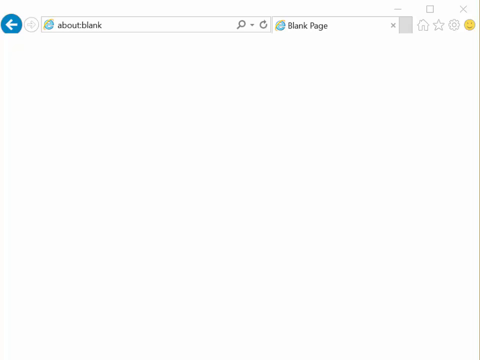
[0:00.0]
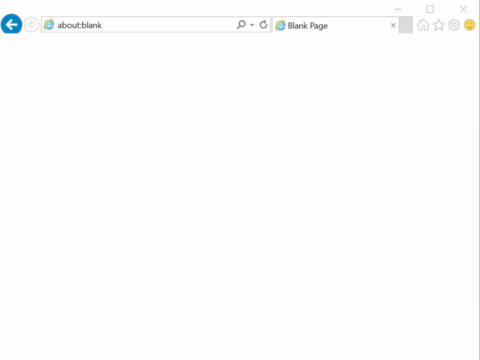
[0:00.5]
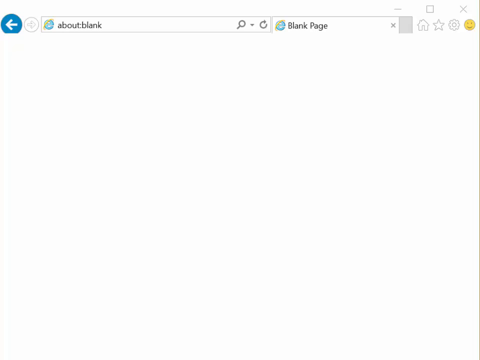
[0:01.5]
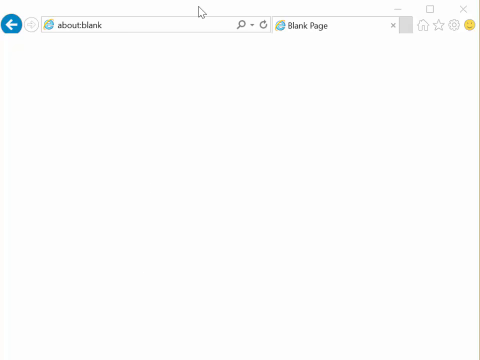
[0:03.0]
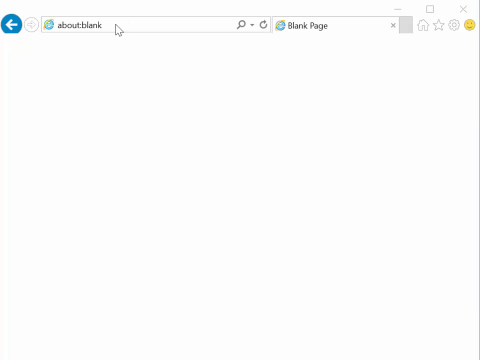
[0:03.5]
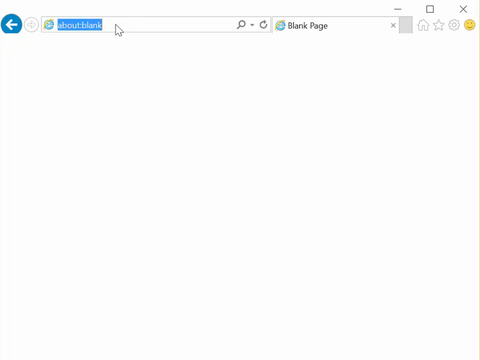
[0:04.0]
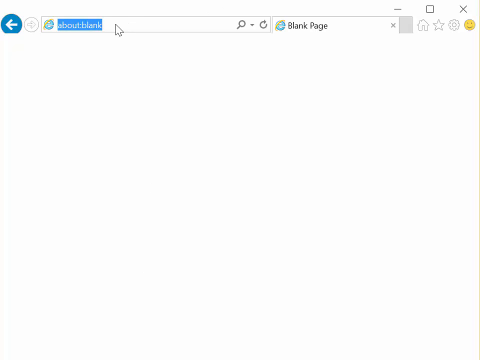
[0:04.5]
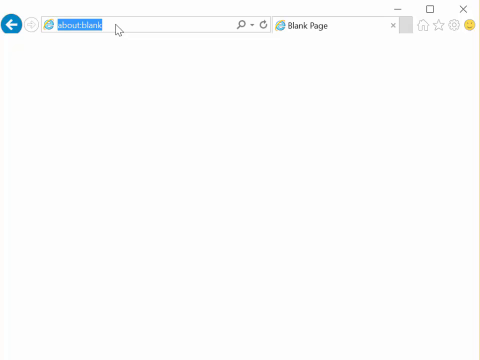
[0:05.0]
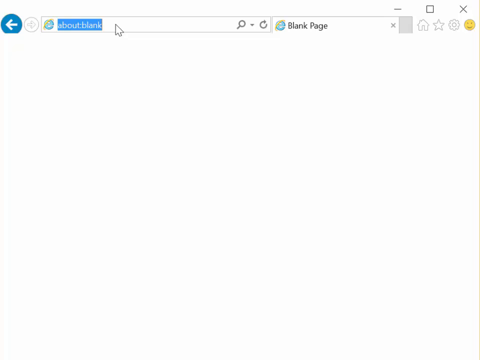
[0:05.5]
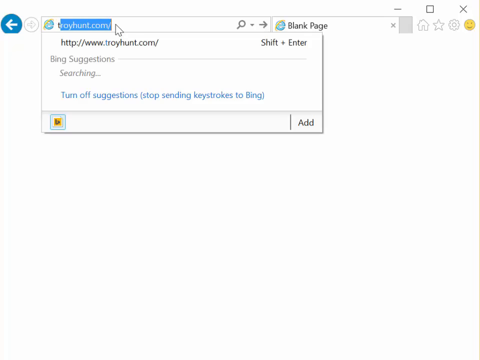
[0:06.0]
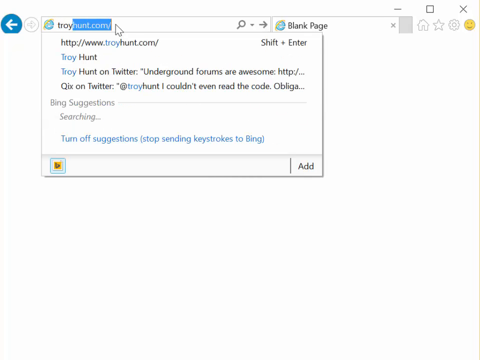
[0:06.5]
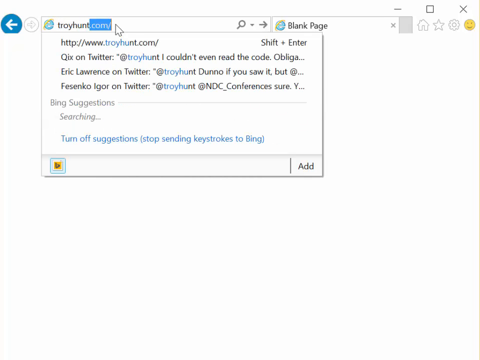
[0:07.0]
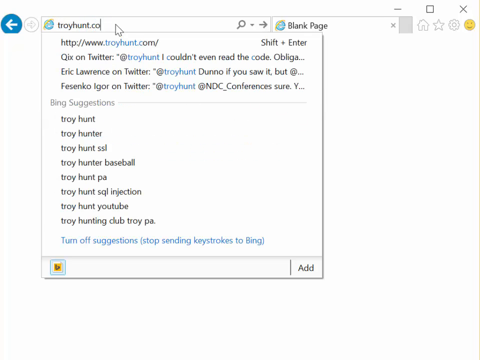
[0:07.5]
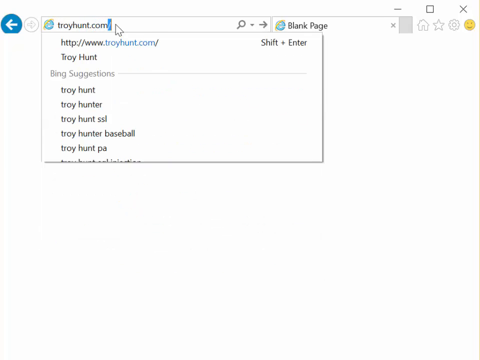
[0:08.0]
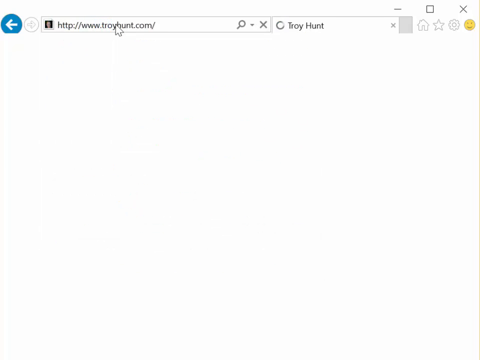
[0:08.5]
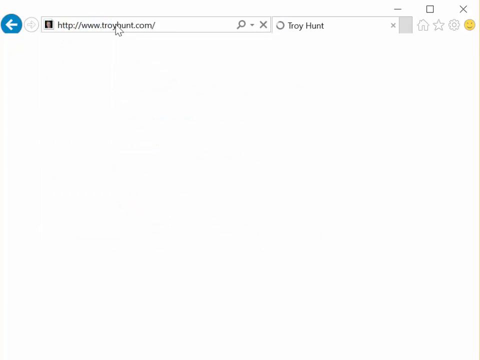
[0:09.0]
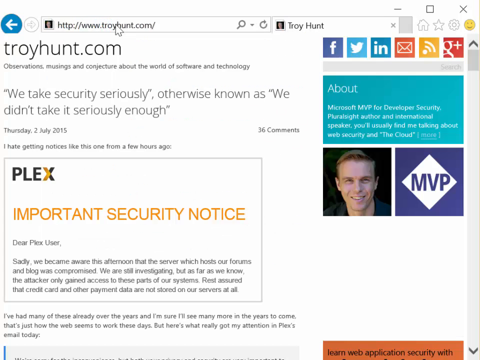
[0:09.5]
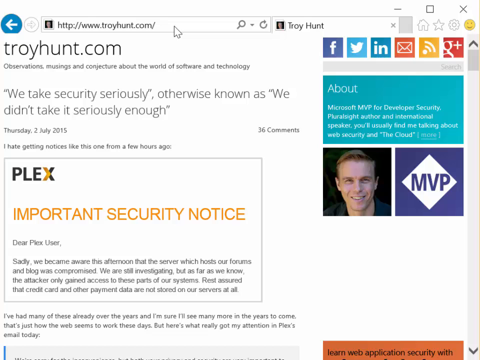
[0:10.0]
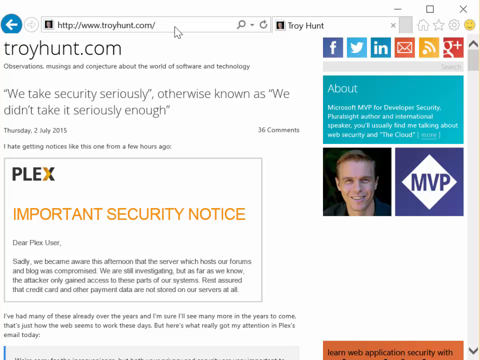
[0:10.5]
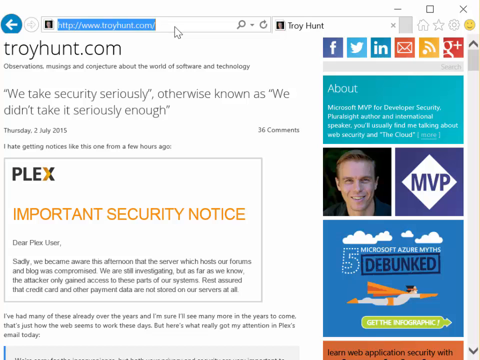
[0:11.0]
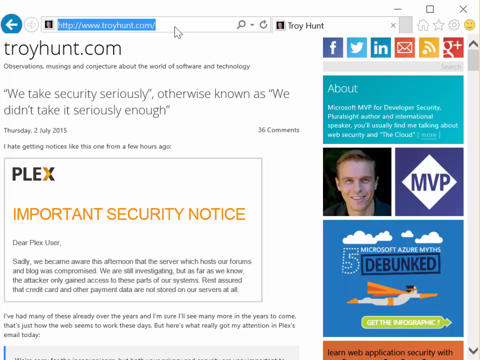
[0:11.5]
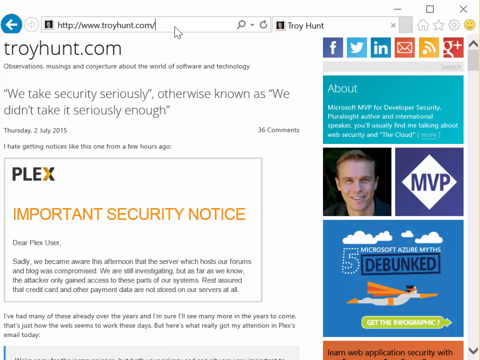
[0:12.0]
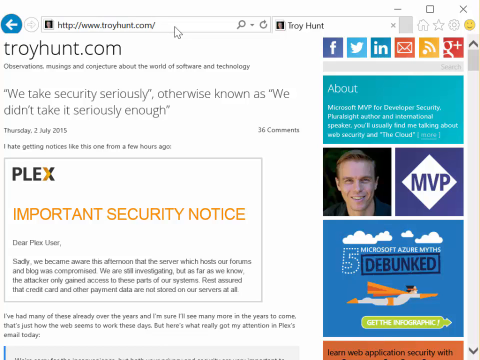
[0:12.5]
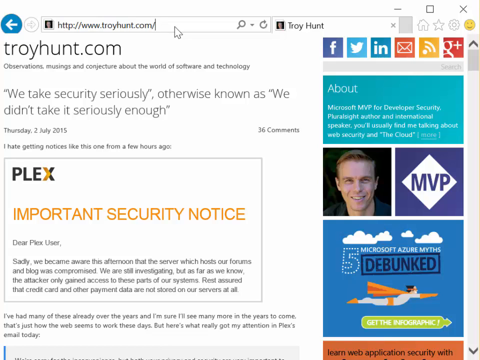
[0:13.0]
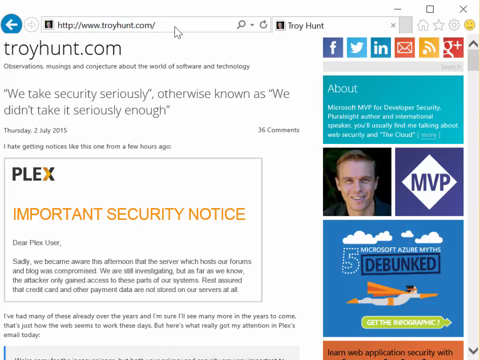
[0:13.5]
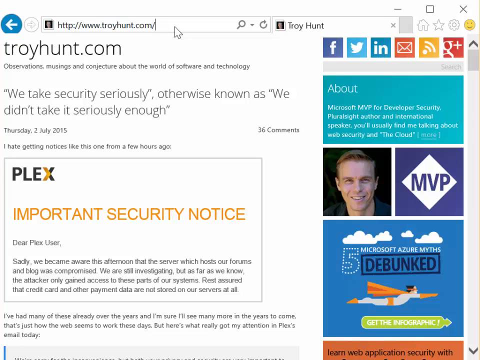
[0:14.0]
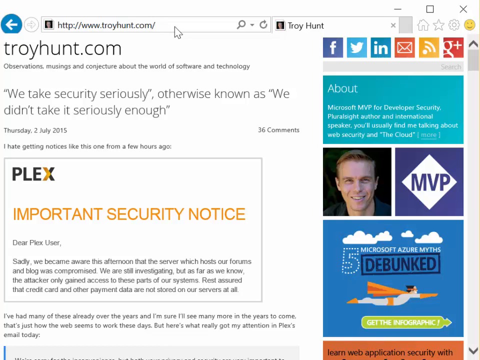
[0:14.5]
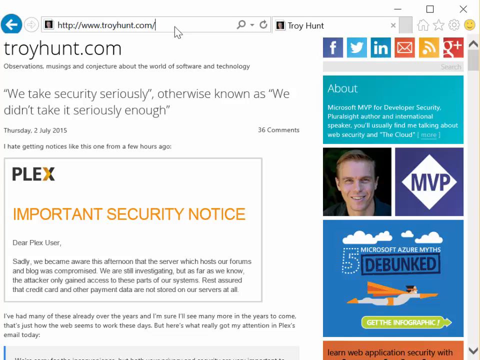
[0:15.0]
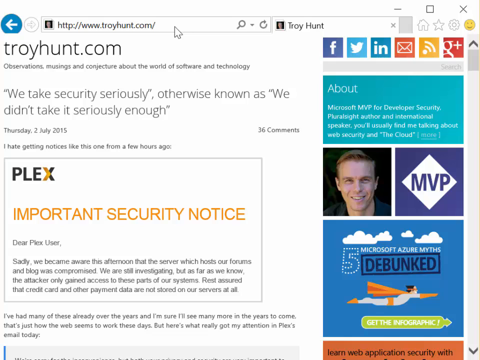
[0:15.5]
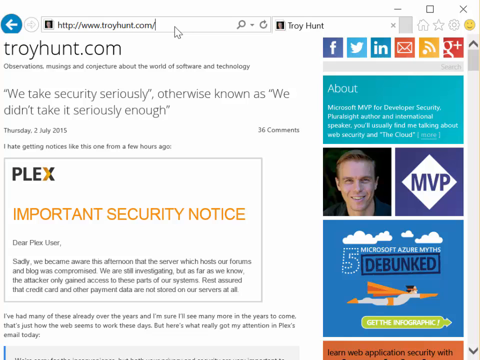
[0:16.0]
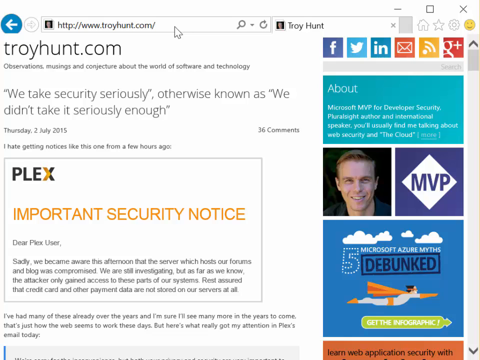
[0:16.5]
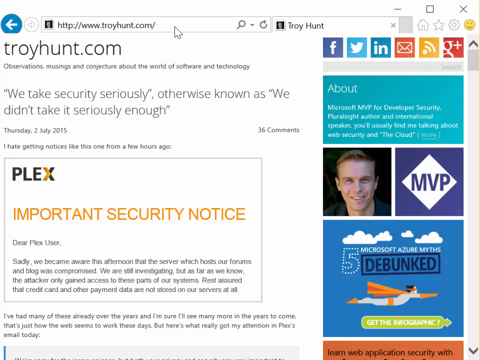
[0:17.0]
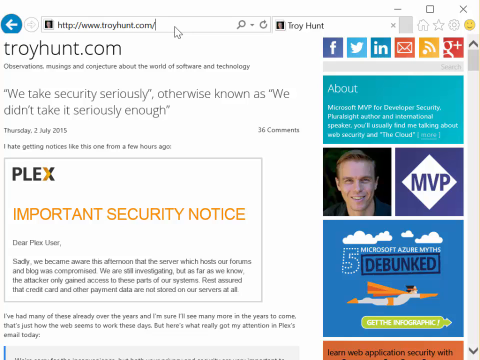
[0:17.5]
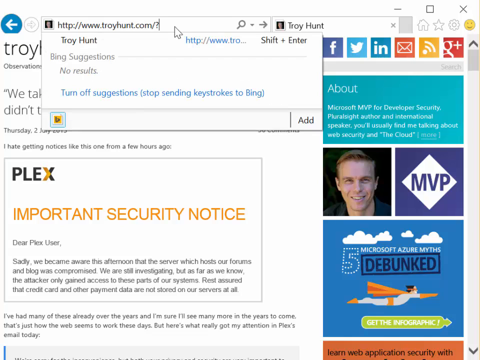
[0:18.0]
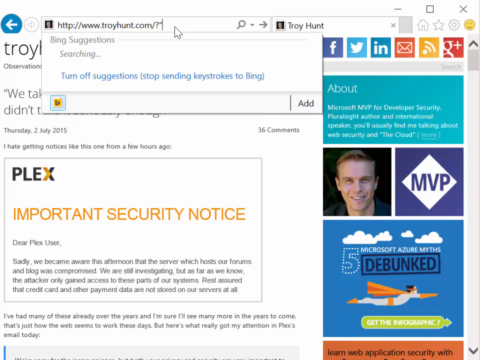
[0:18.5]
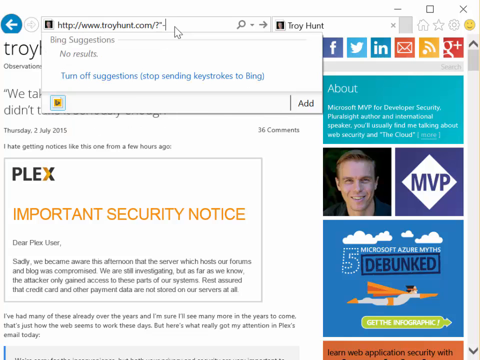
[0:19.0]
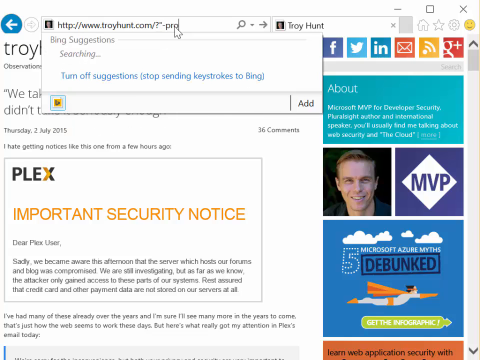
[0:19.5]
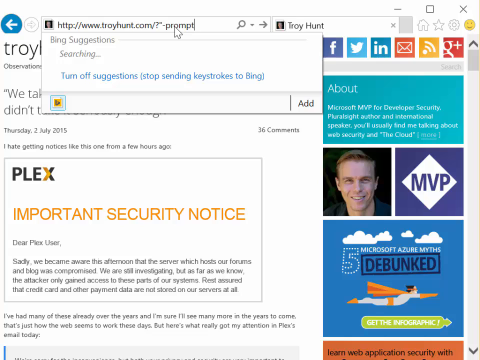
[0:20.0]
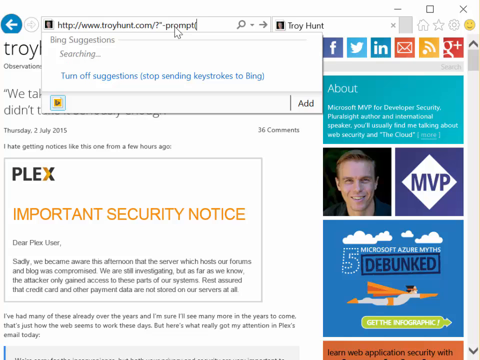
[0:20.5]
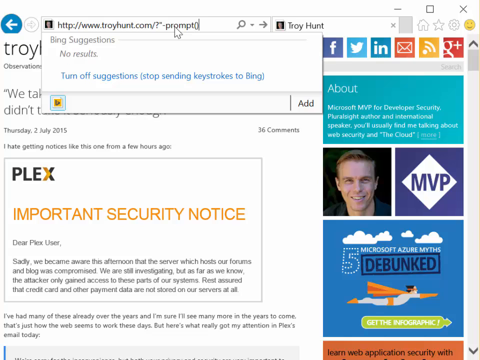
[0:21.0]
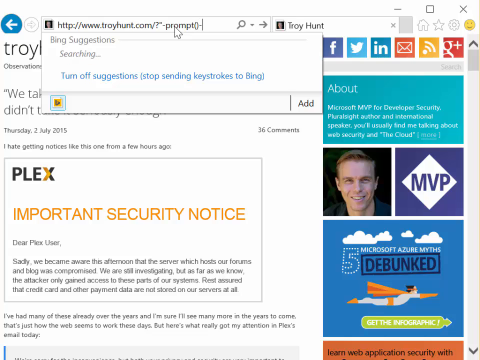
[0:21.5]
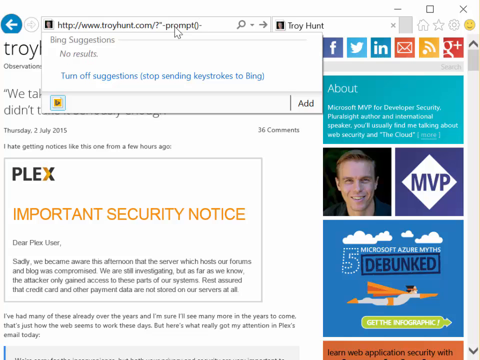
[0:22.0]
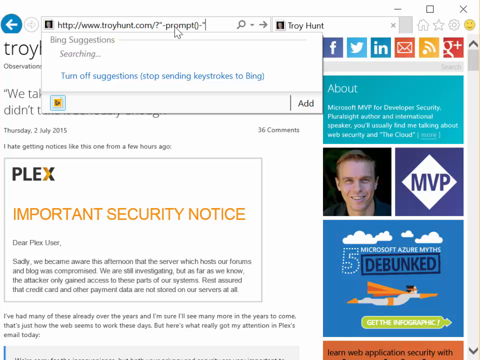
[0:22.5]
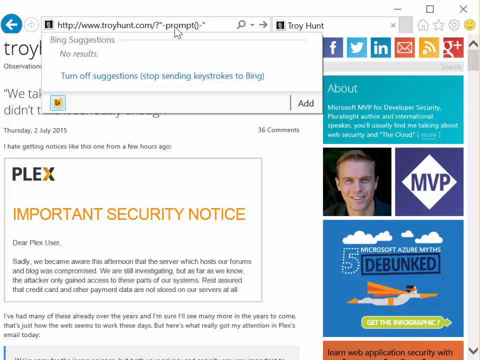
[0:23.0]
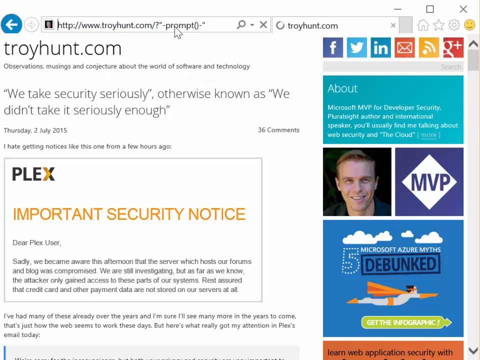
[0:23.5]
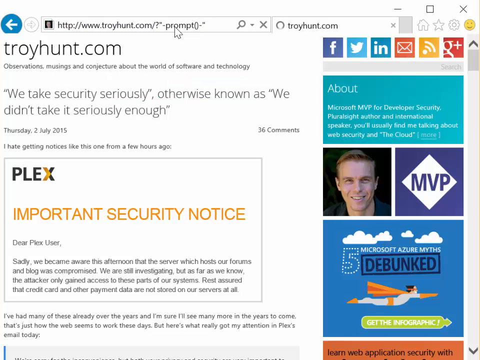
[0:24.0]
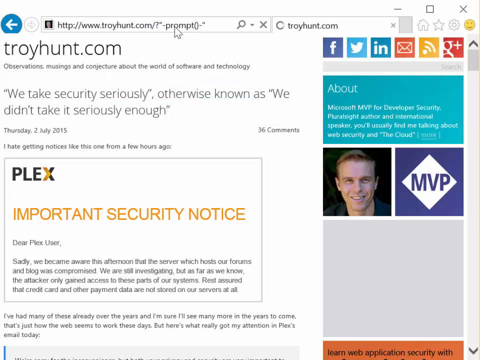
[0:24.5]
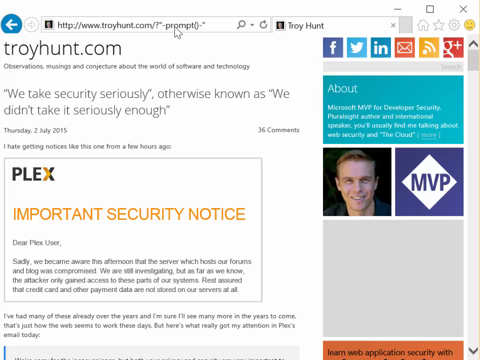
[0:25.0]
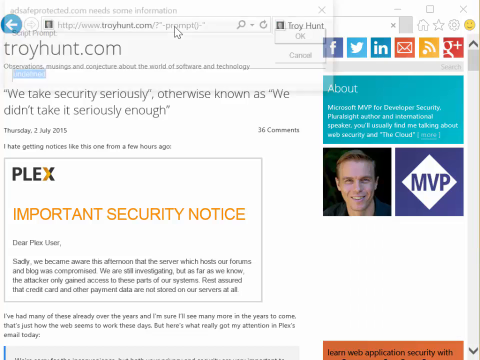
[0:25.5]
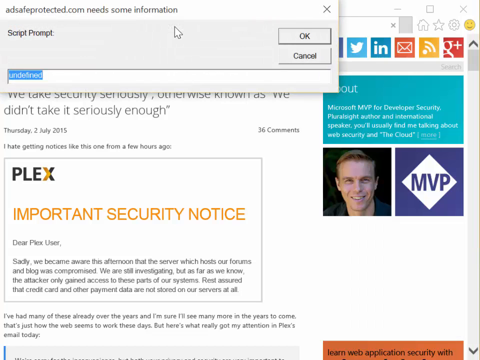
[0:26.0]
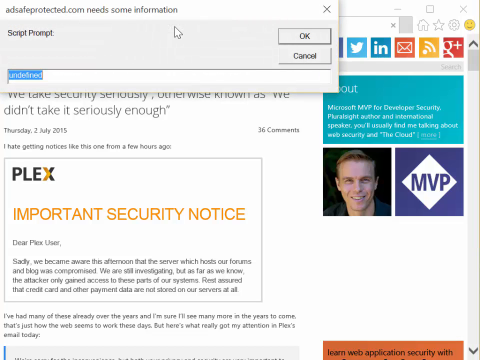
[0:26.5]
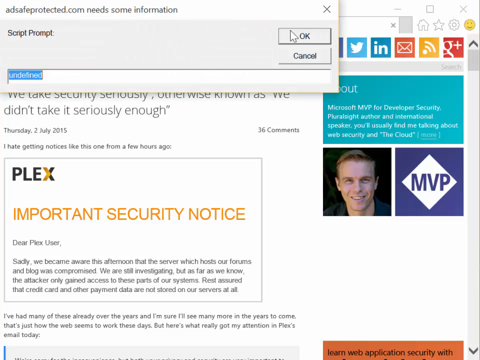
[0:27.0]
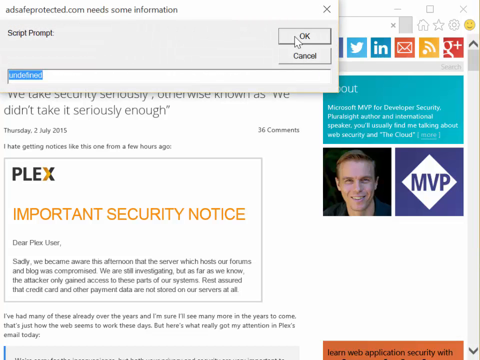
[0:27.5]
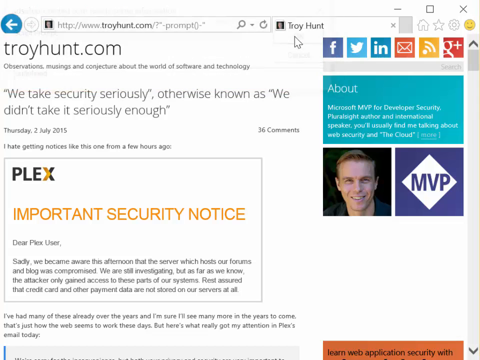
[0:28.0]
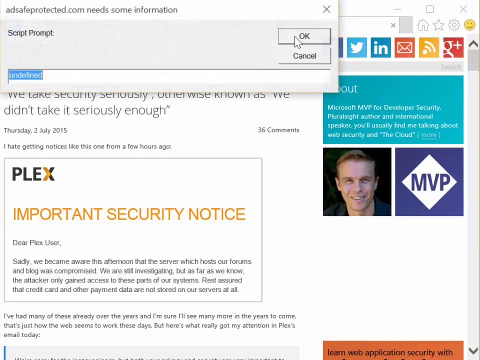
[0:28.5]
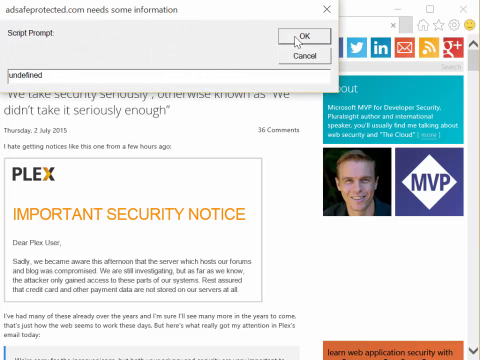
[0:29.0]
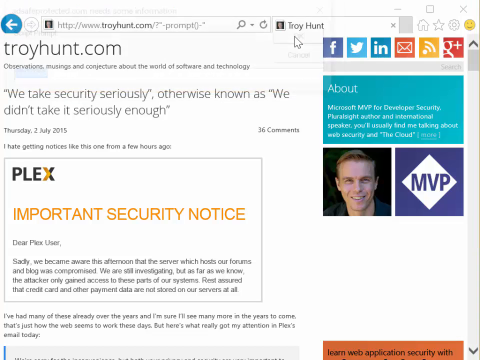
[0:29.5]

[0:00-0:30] Someone is looking at a computer desktop showing a basically blank web page, with the address bar reading "about blank." They go into the address bar, apparently looking for a certain website, and start typing the site's name. It appears to pop up as a suggestion, apparently saved in their history, reading "Troy Hunt.com." The browser then opens the TroyHunt.com website, which looks to be a security-themed site, or possibly a personal website, kind of like a blog. At the top, beneath the title "Troy Hunt.com," a description reads "observations, musings, and conjecture about the world of software and technology." Below that is a quote: "we take security seriously. Otherwise known as, we didn't take it seriously enough."